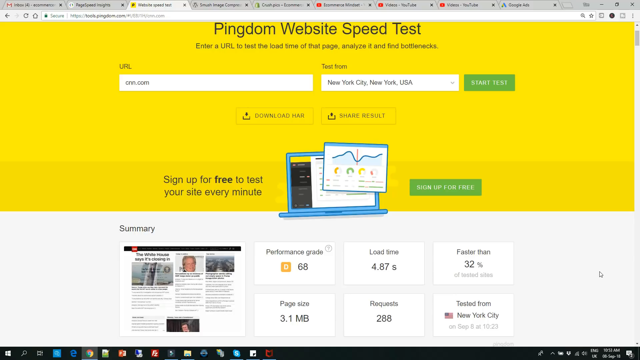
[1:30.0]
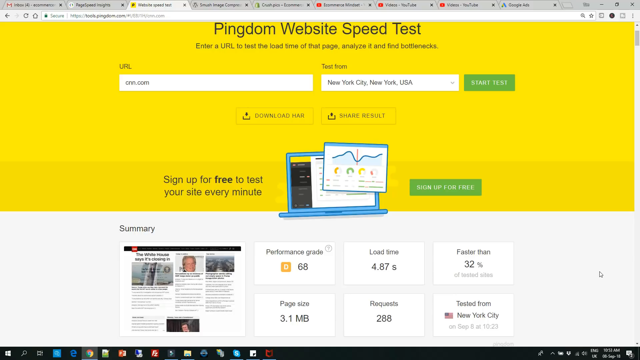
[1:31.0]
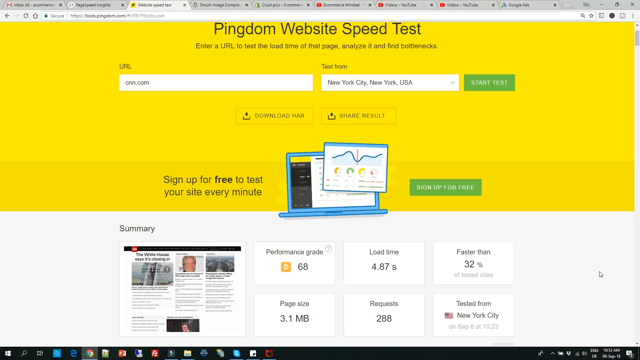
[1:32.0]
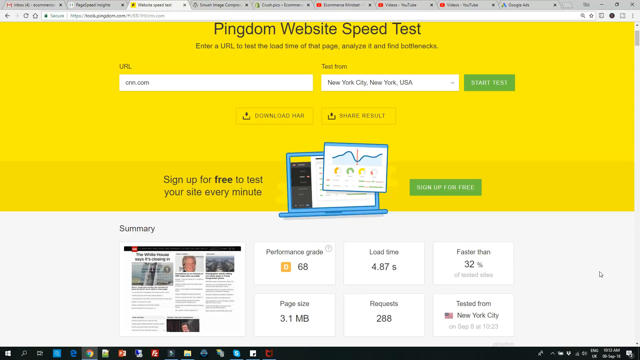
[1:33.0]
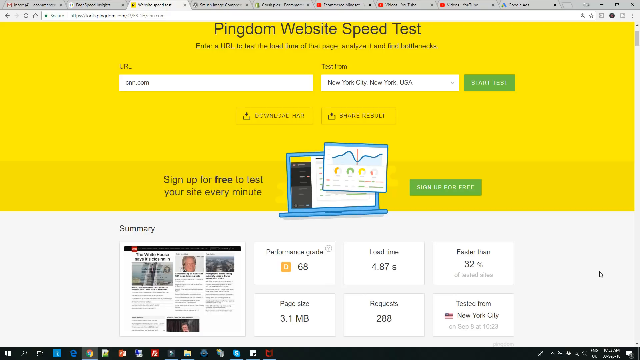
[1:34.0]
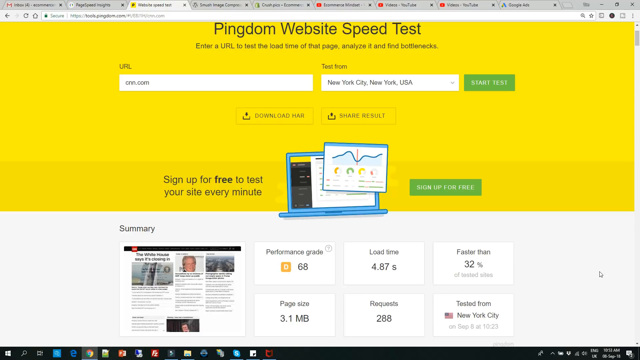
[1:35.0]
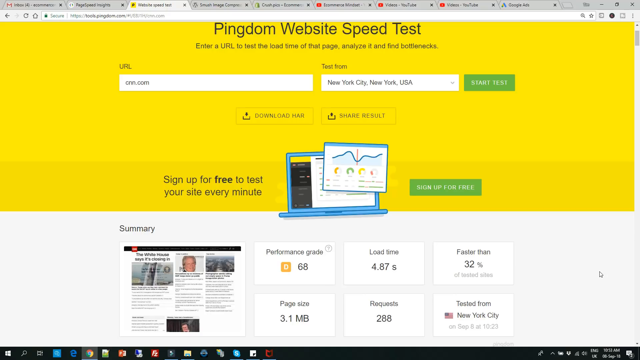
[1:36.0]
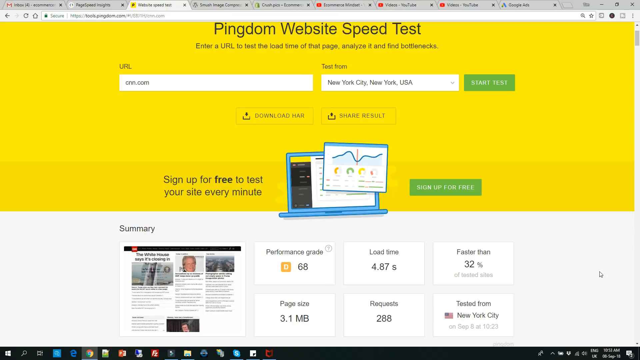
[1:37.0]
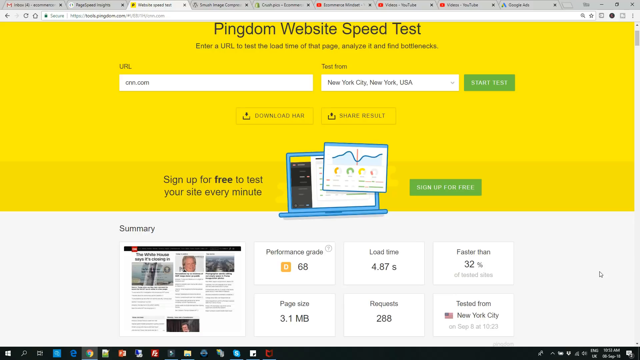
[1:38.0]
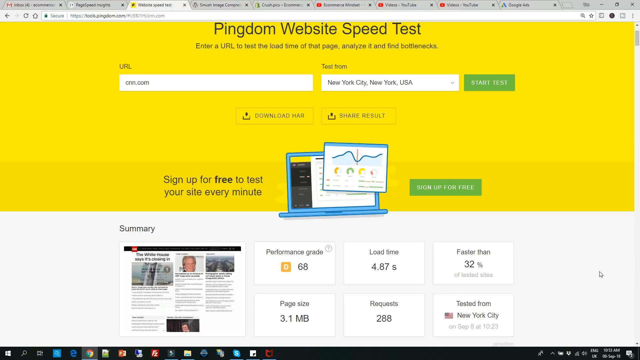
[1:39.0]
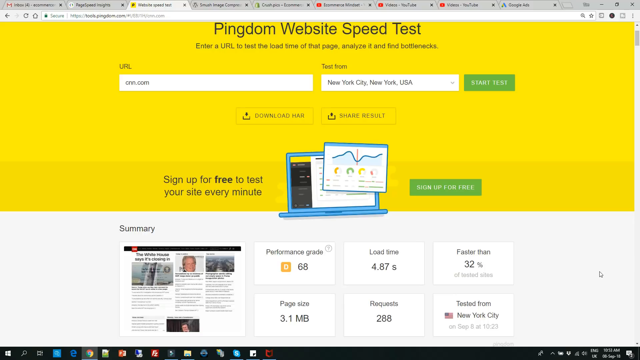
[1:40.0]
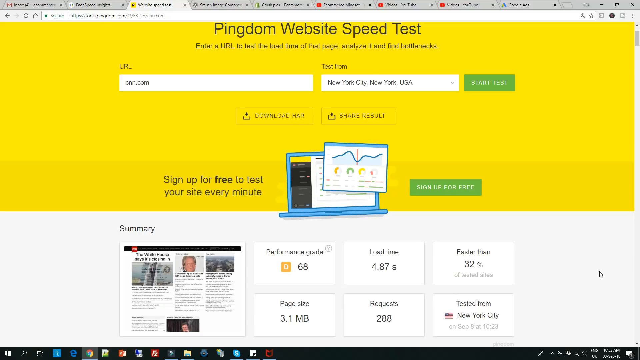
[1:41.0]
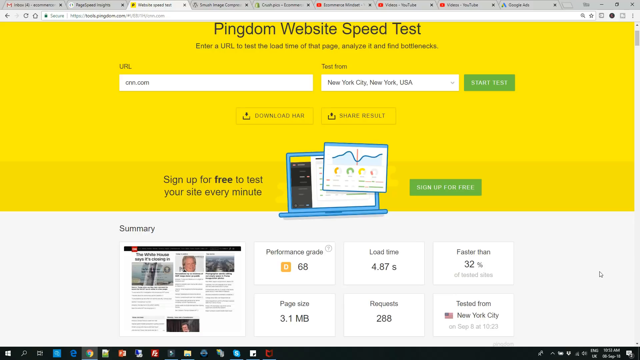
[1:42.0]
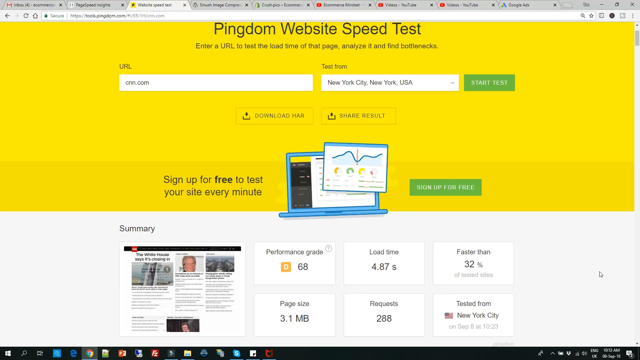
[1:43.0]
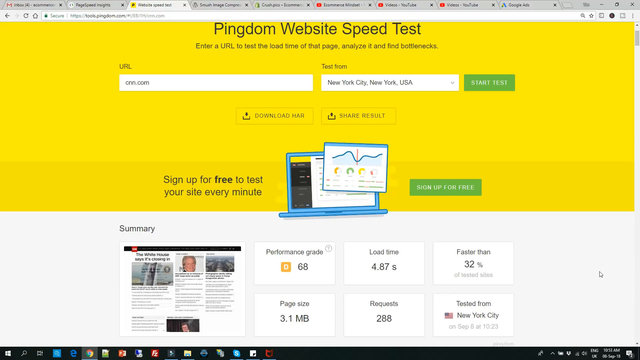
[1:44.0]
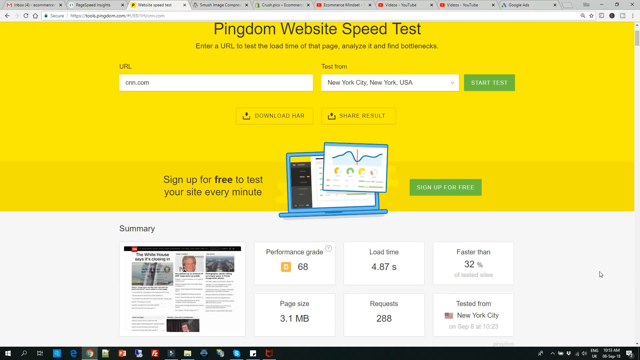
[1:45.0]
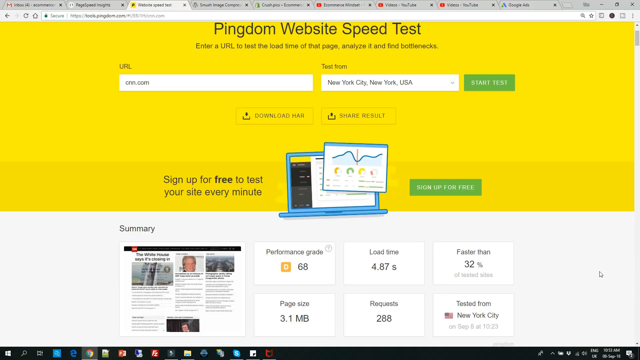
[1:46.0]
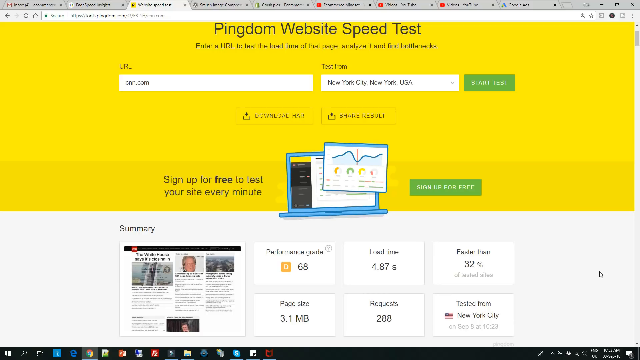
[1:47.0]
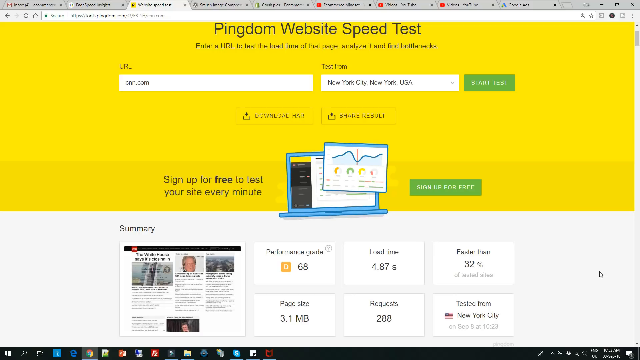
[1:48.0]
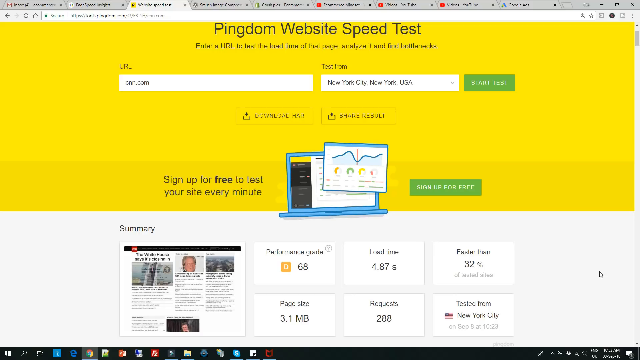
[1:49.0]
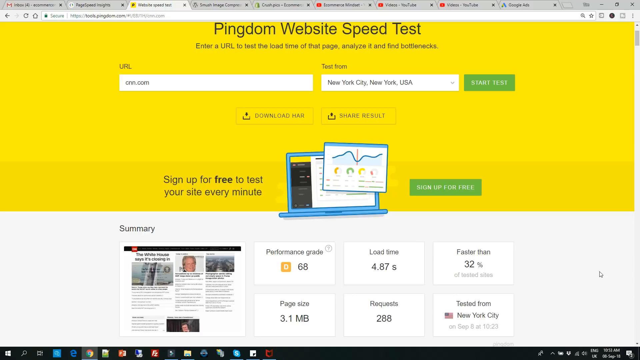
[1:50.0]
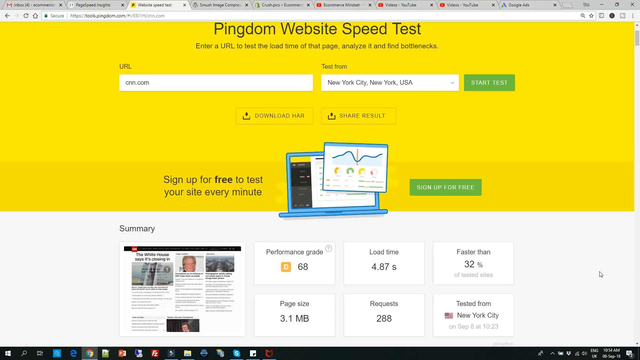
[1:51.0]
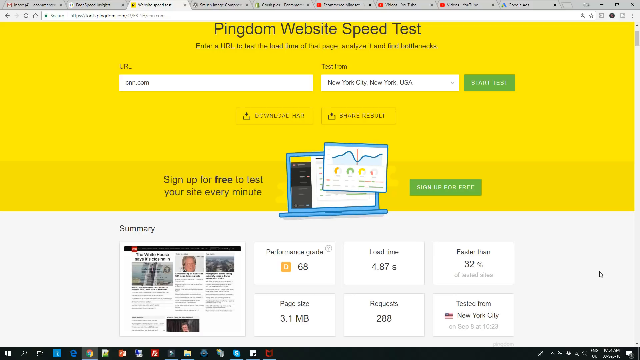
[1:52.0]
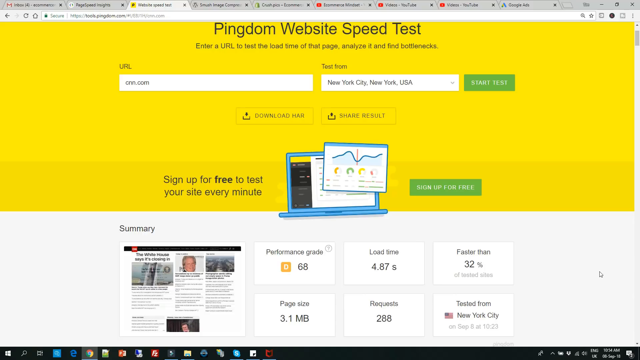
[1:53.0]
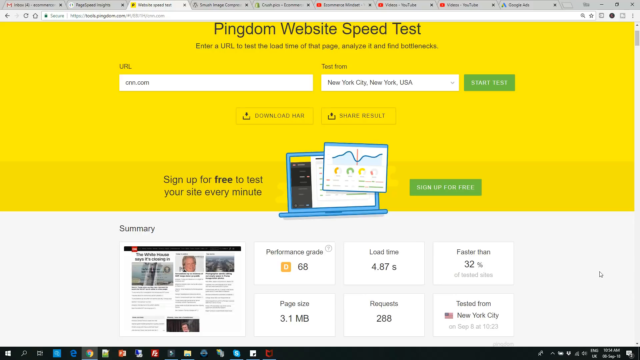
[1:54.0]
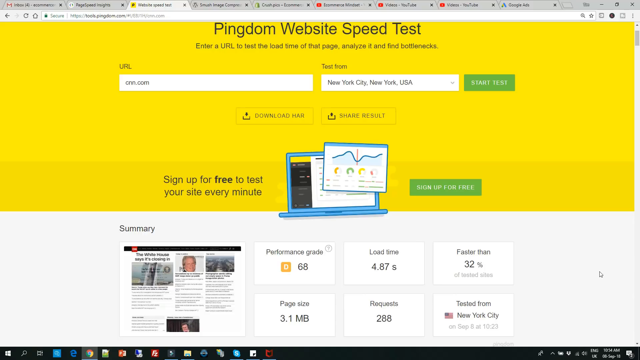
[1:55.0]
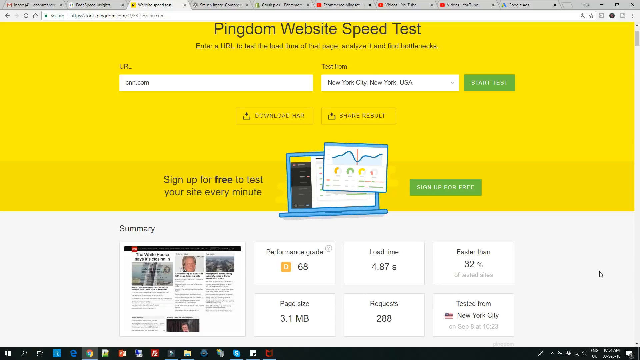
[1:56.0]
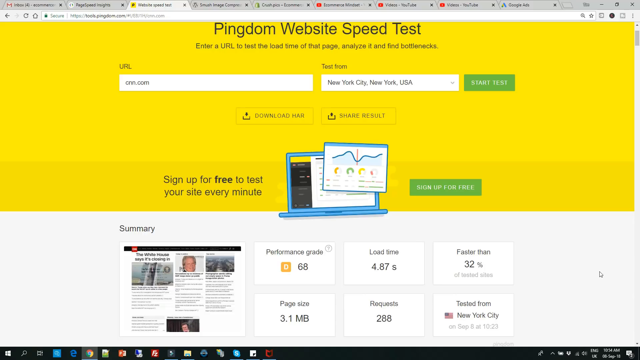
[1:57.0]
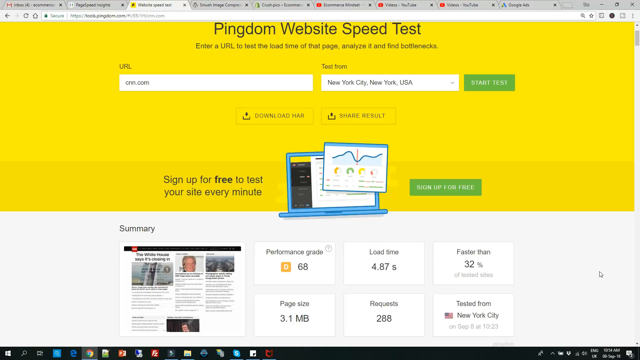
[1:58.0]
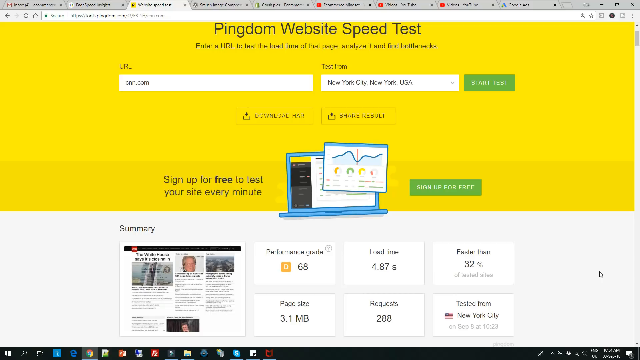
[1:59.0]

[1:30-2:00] Many tabs are open, including YouTube and Google tabs, about nine in total. The Pingdom page reads "Pingdom website speed test", "Enter a URL to test the load time of that page" and "Analyze it and find bottlenecks". The URL being tested is cnn.com, from New York City, New York, United States. A "start test" button is shown along with the results: the site is 32% faster than other sites, with a performance grade of 68. The page also offers an option to sign up for free to test a site every minute. Nothing else happens; the screen stays on this page throughout.